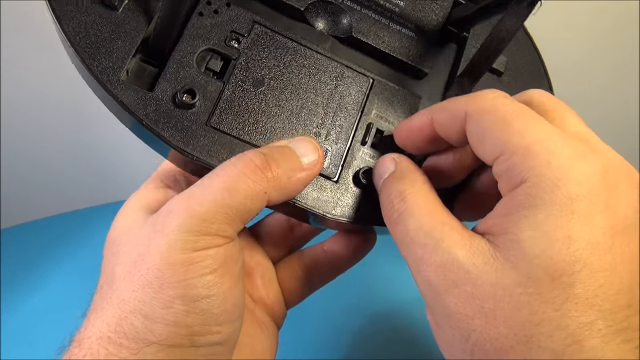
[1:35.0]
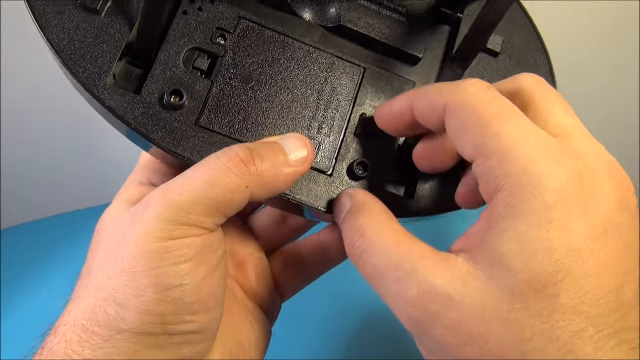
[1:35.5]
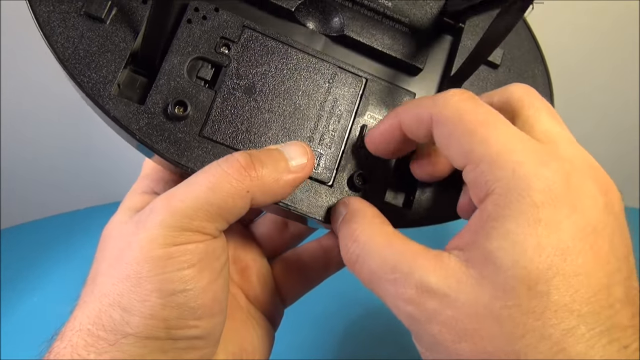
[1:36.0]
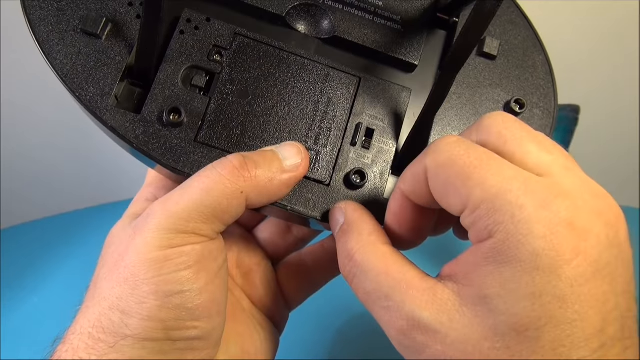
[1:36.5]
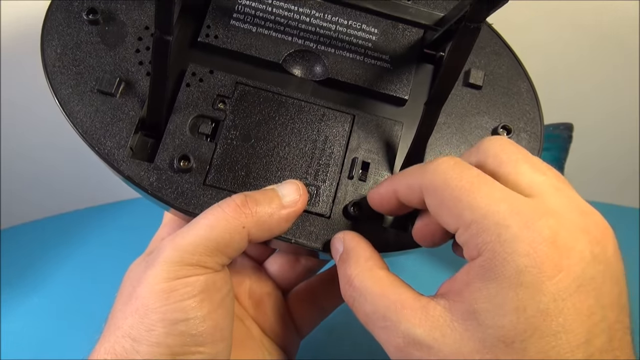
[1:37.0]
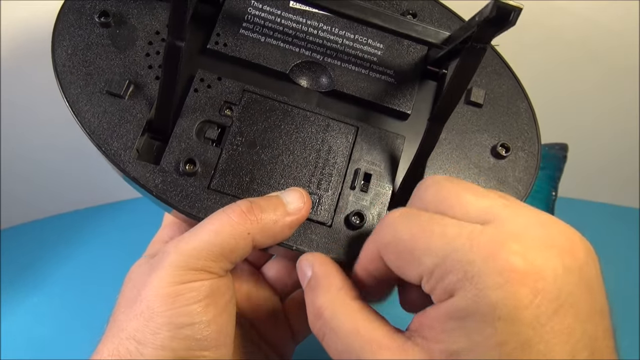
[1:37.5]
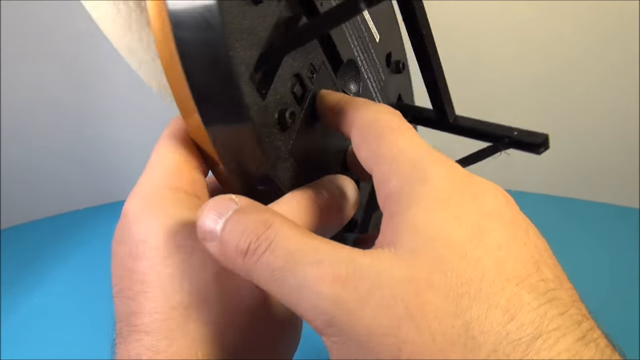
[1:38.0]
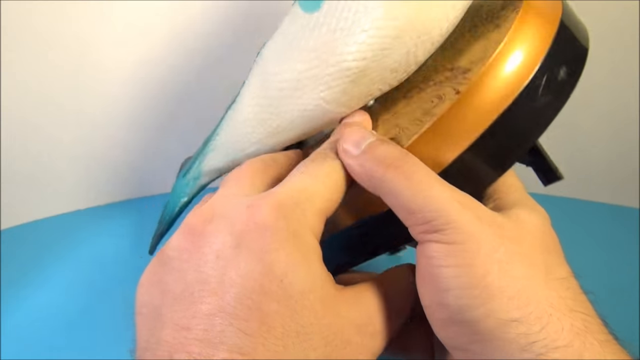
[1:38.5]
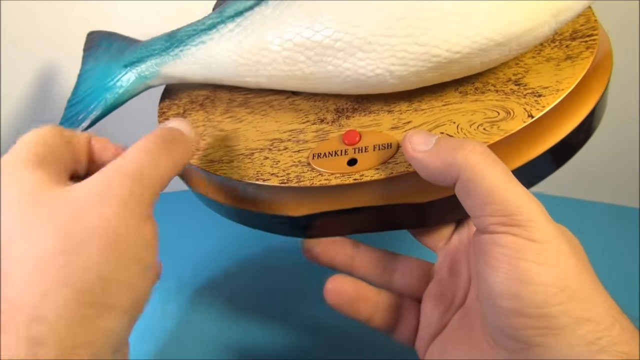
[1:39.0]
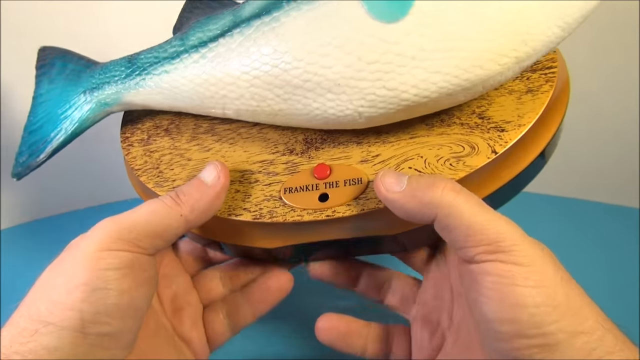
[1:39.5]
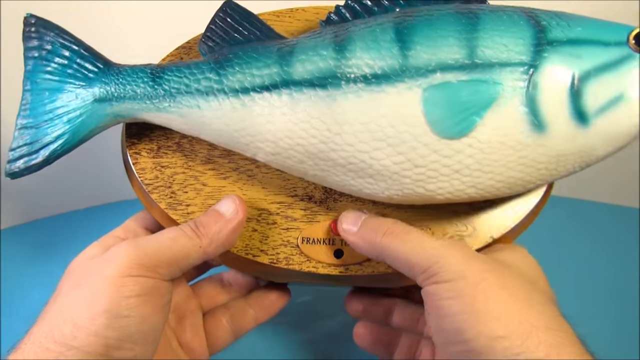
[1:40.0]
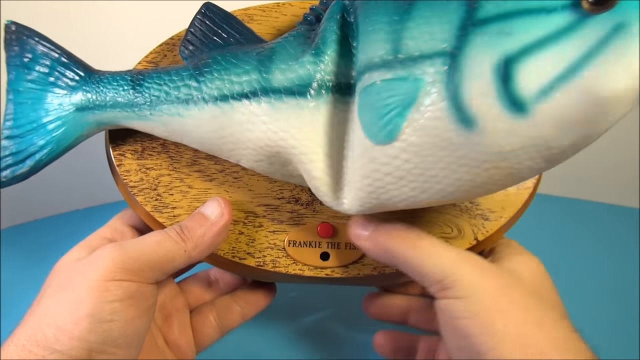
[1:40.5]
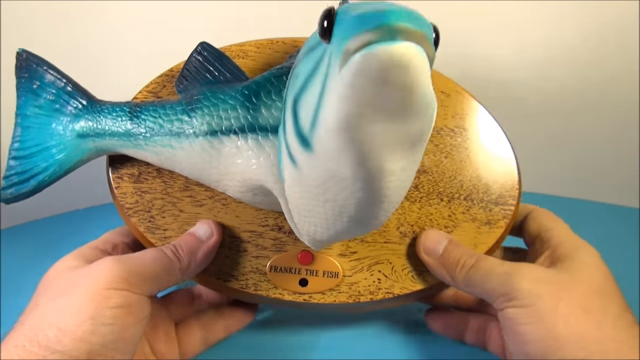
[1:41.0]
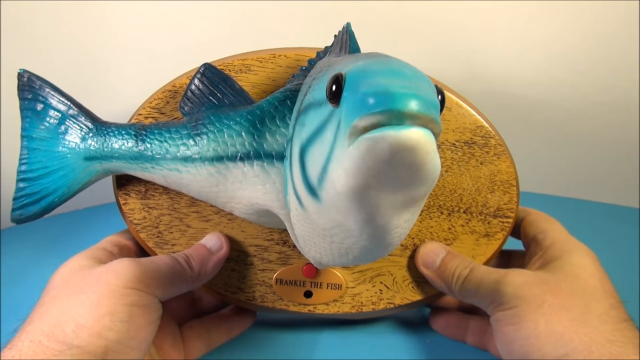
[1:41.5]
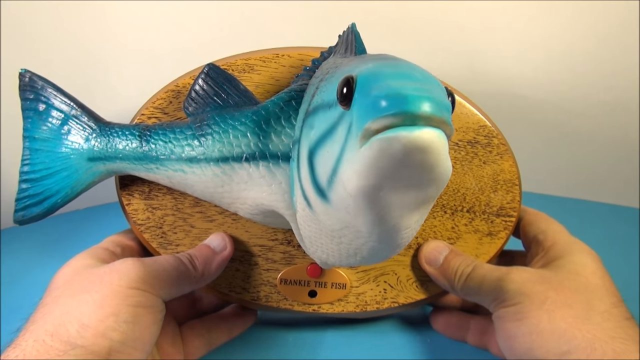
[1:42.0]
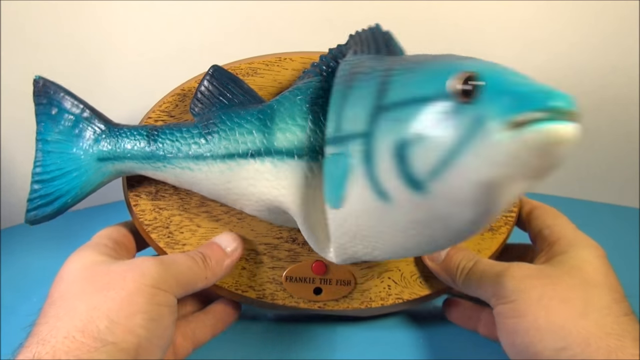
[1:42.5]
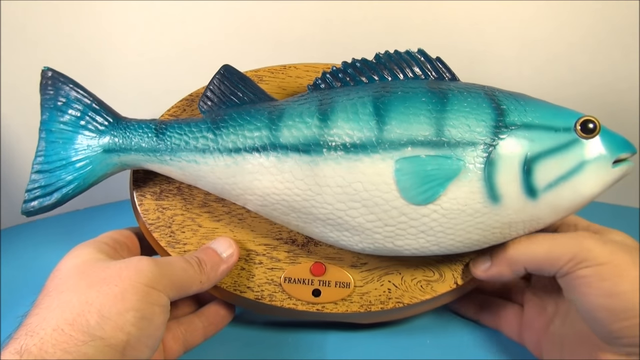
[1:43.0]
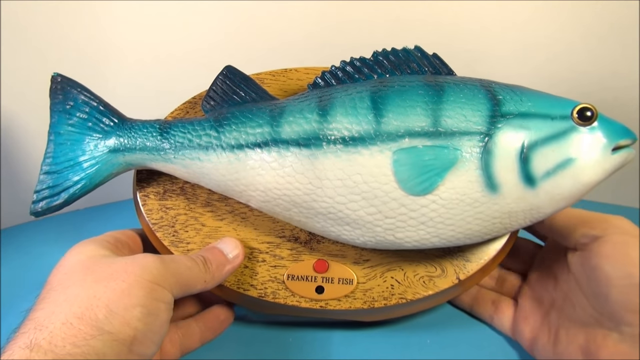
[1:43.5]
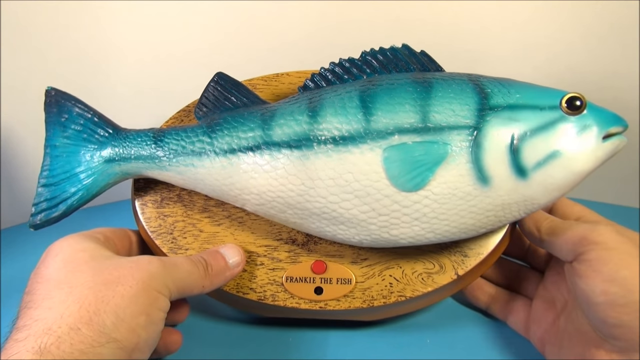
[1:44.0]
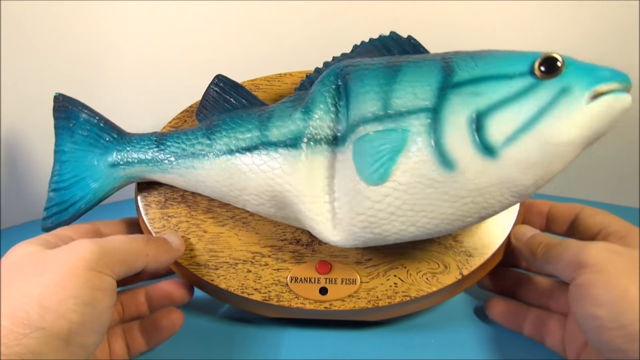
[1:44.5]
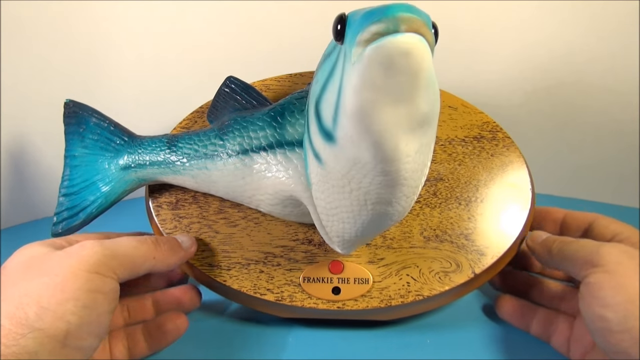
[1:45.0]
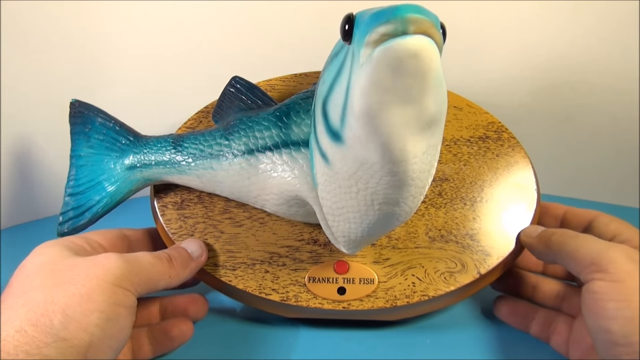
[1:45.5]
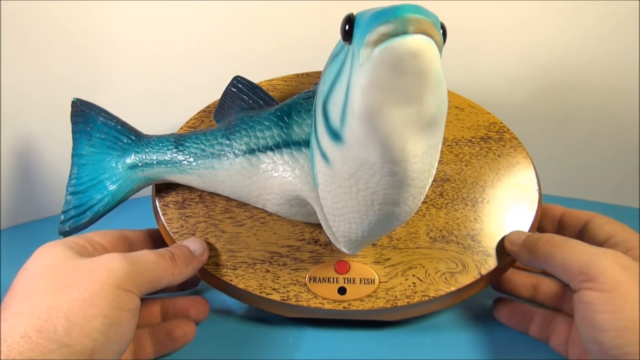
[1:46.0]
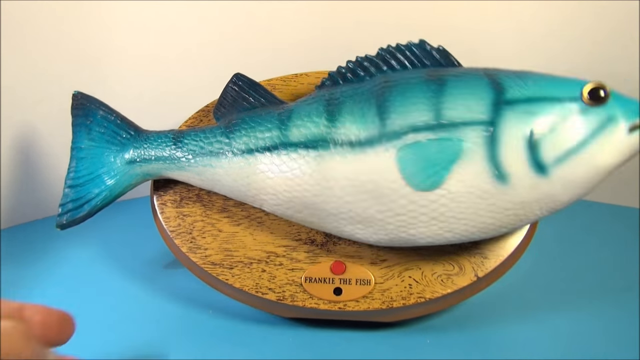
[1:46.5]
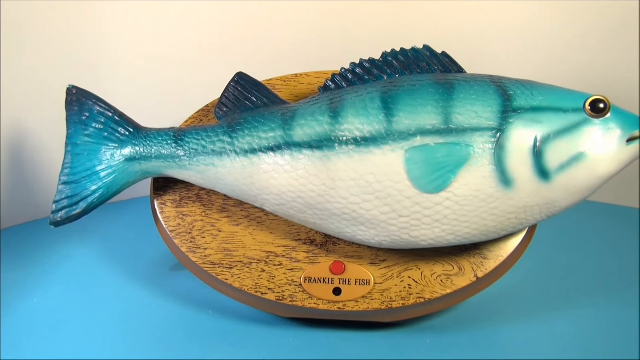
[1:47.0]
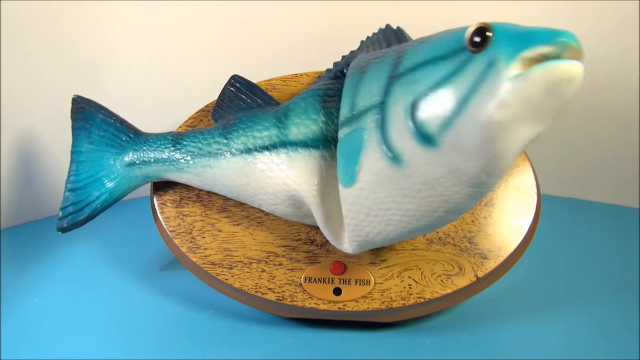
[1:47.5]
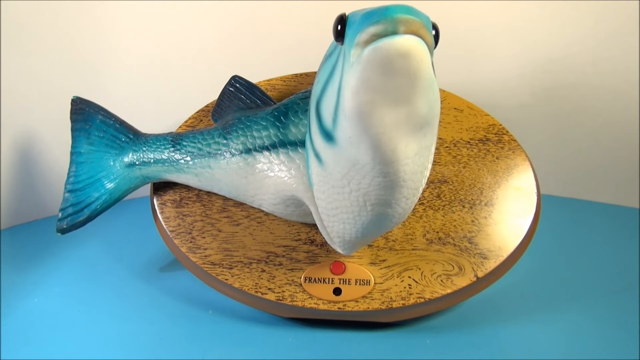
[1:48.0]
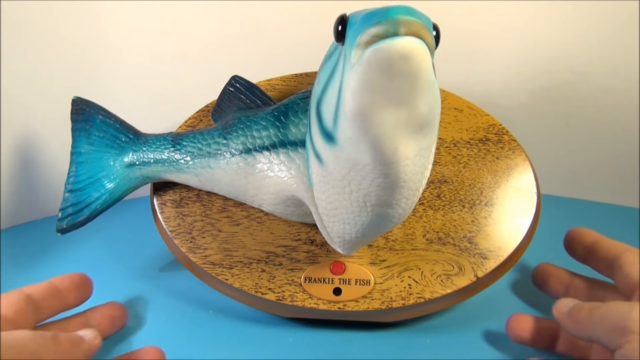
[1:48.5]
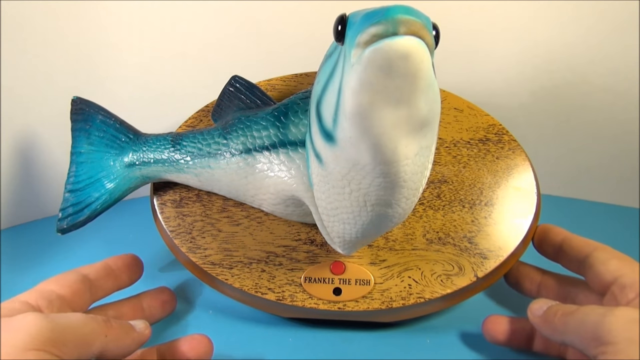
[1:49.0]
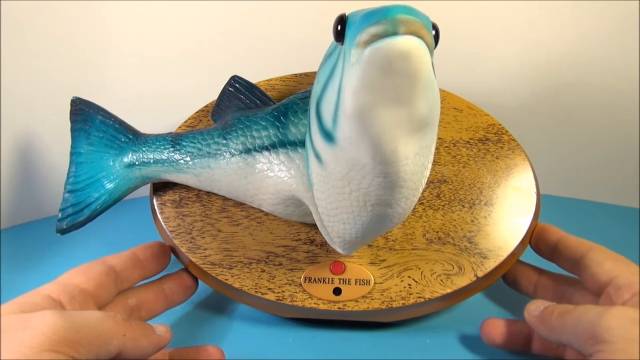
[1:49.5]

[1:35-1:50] The person flips the switch on the back of the mounting plate again, turns it back over, and presses the red button just above Frankie the fish's nameplate. The fish turns its head 90 degrees and sings, goes flat, turns 90 degrees and sings again, and goes flat again, apparently set to a loop or repeat mode by the switch. The fish and its mounting plate are then set down on the blue-covered table using the bracket that pulls out from the back of the toy.